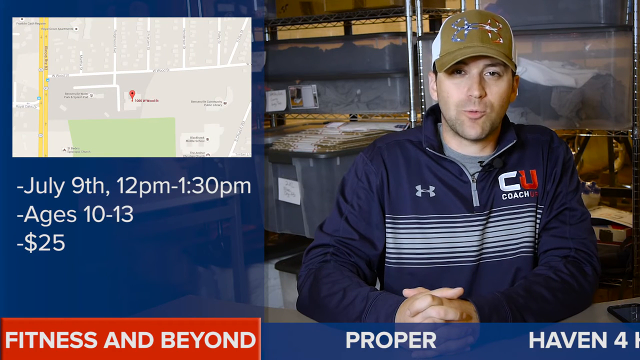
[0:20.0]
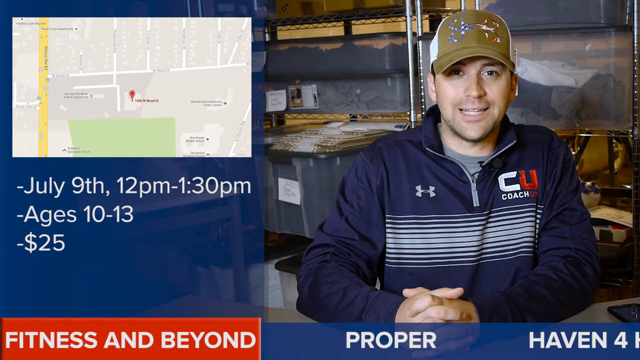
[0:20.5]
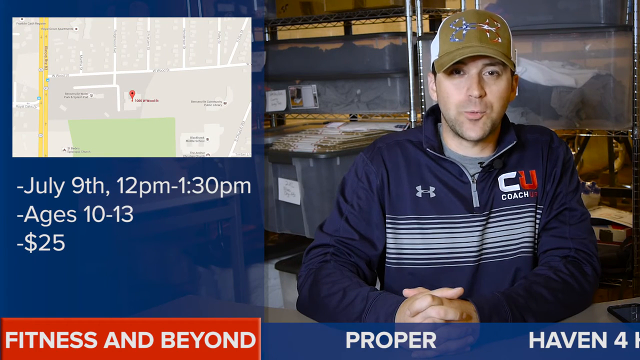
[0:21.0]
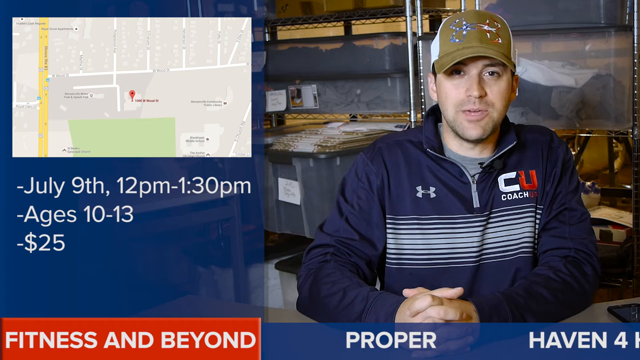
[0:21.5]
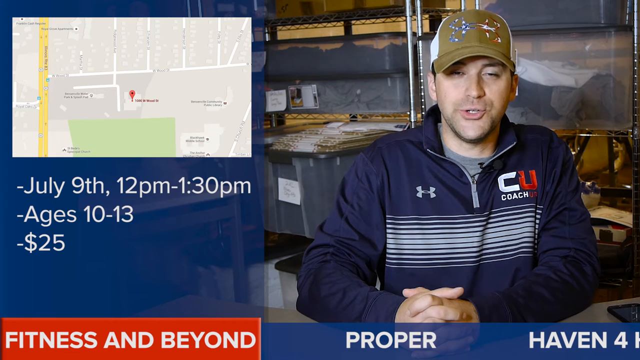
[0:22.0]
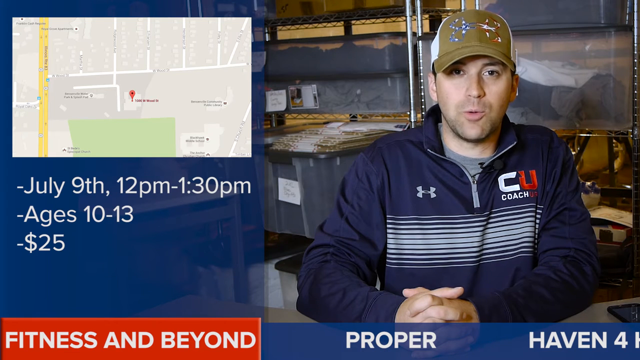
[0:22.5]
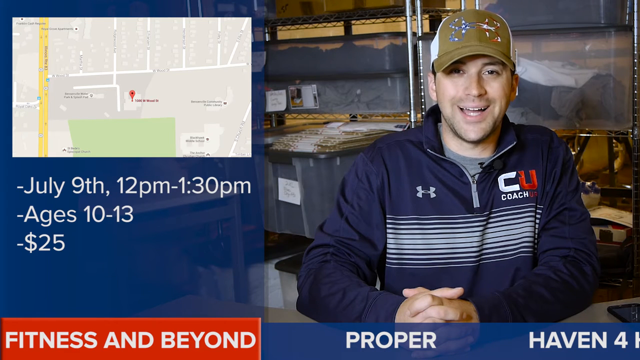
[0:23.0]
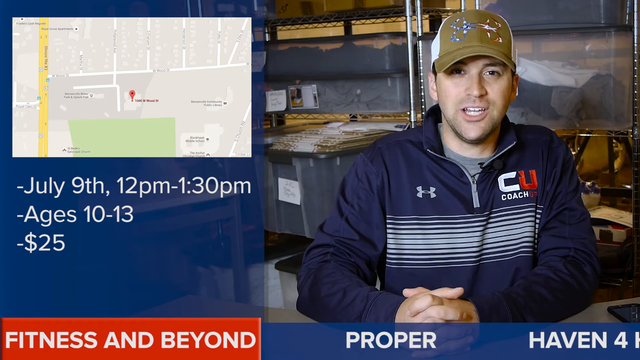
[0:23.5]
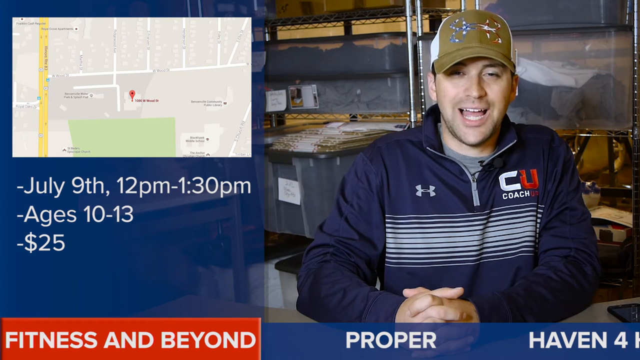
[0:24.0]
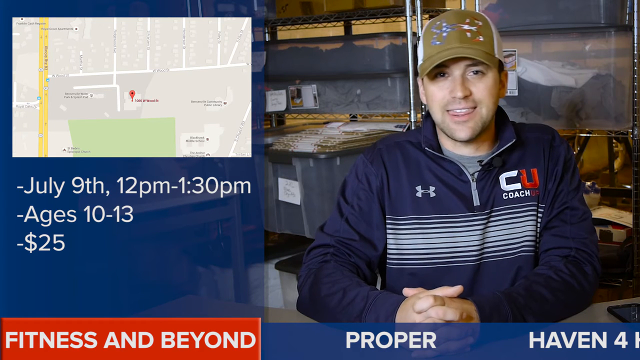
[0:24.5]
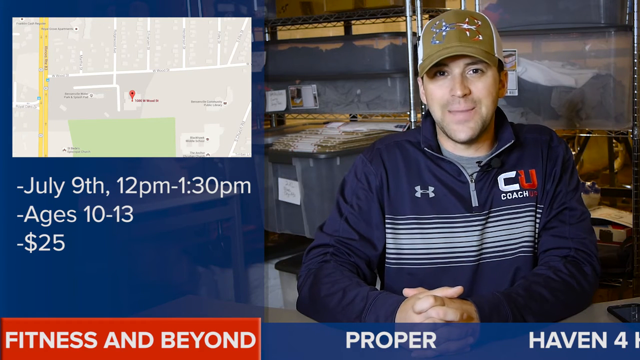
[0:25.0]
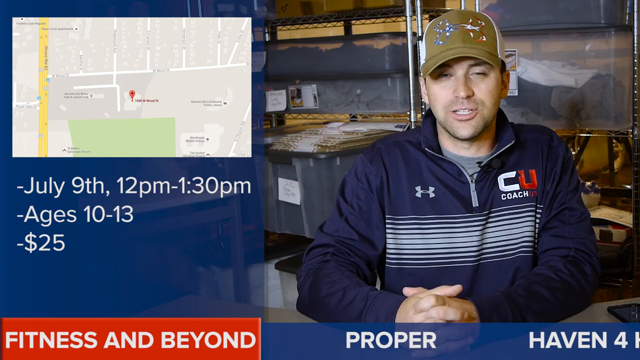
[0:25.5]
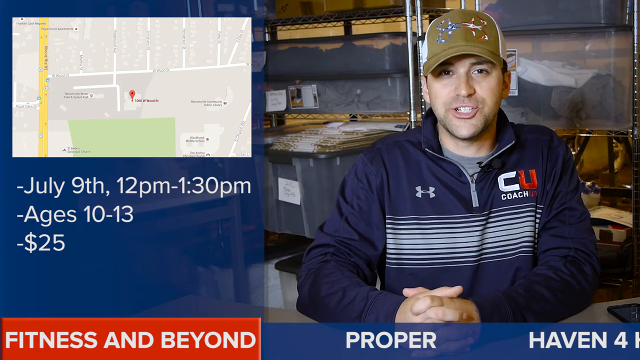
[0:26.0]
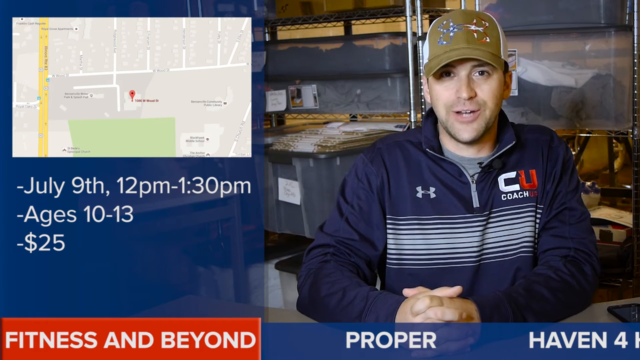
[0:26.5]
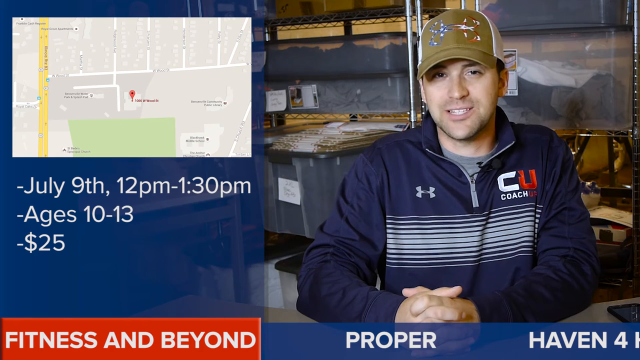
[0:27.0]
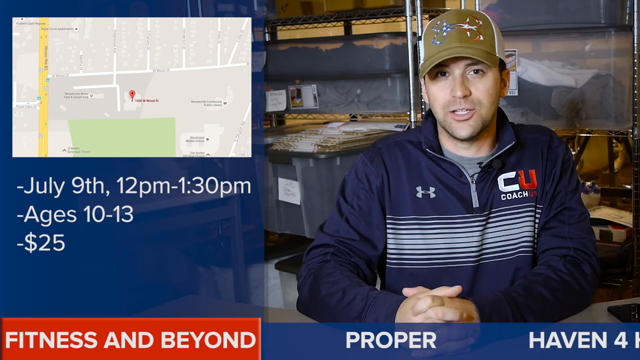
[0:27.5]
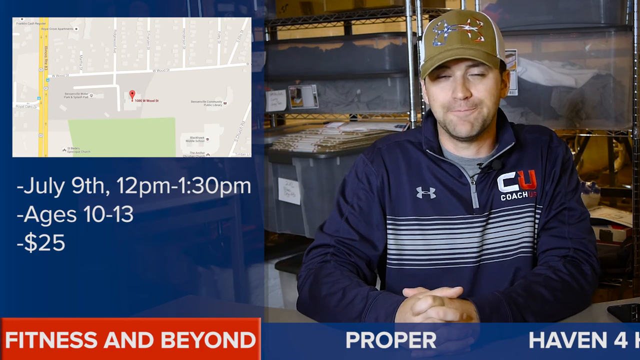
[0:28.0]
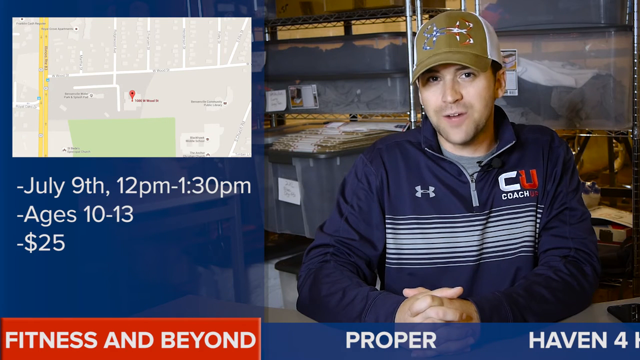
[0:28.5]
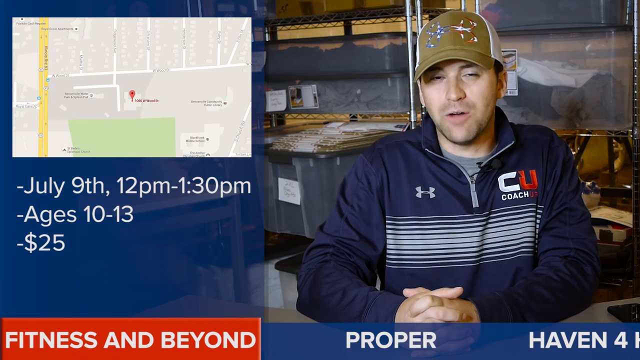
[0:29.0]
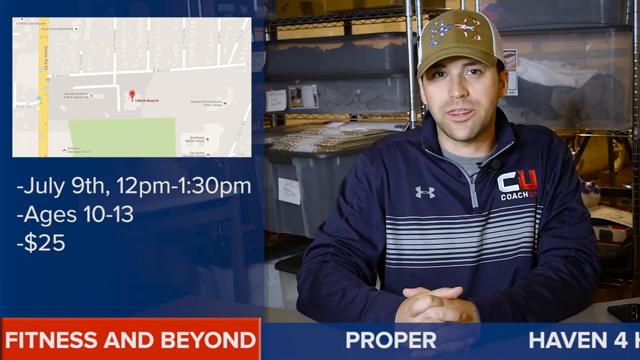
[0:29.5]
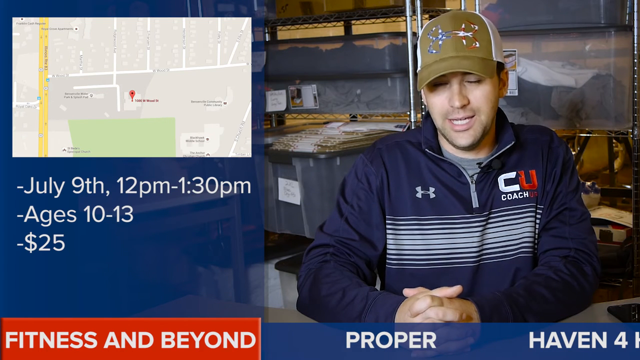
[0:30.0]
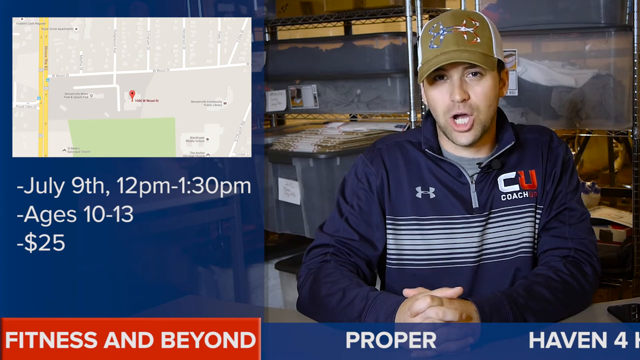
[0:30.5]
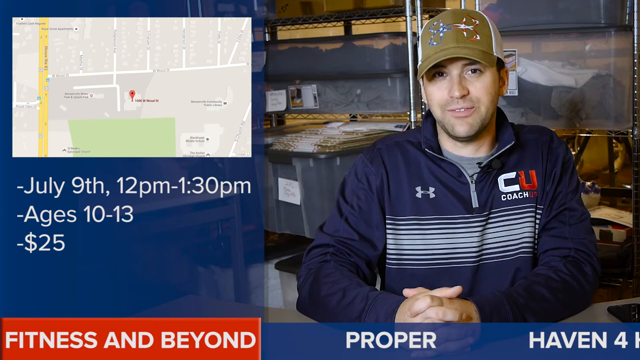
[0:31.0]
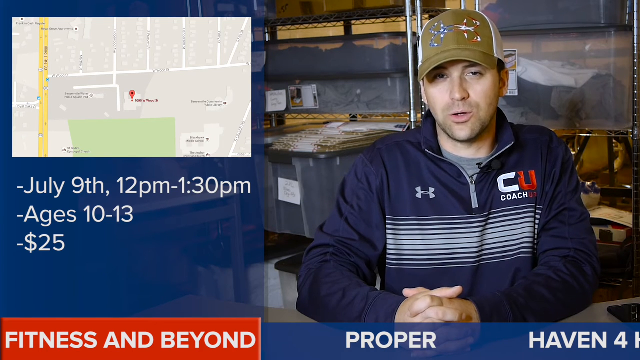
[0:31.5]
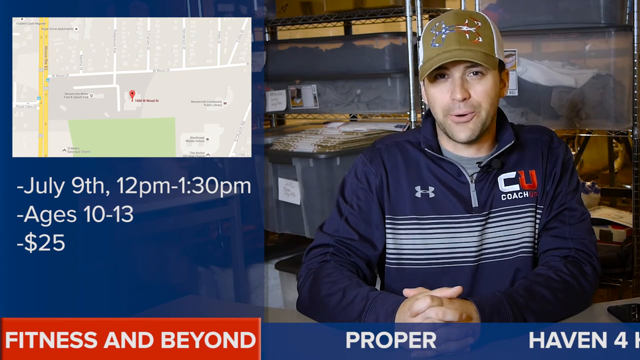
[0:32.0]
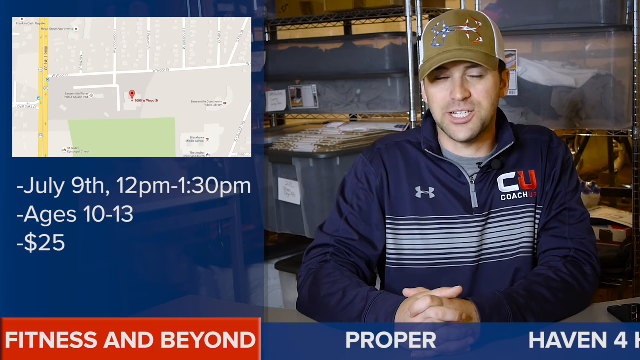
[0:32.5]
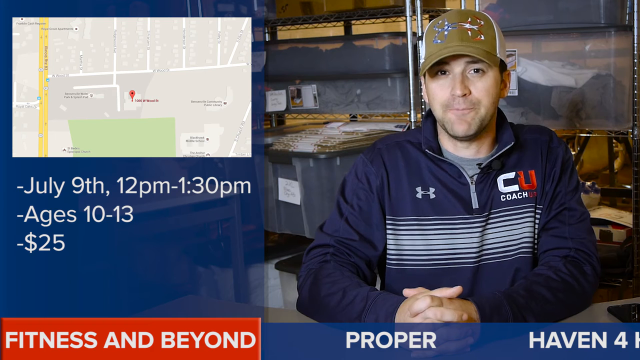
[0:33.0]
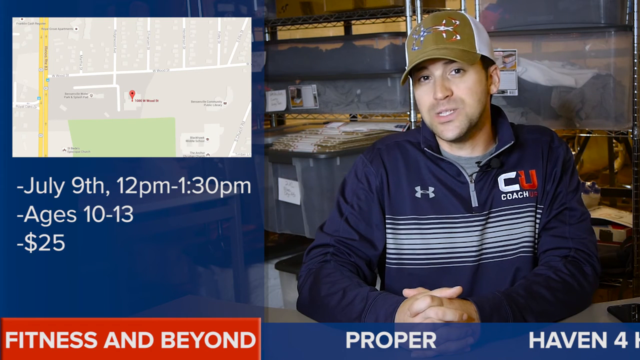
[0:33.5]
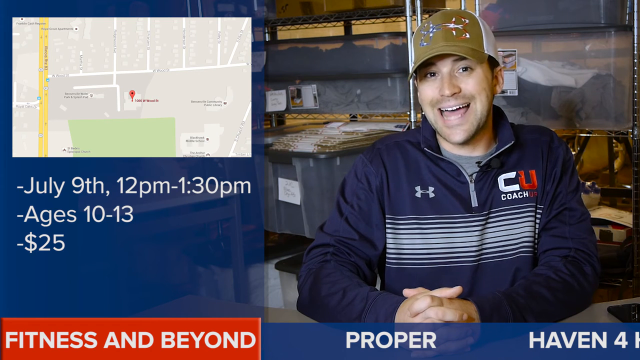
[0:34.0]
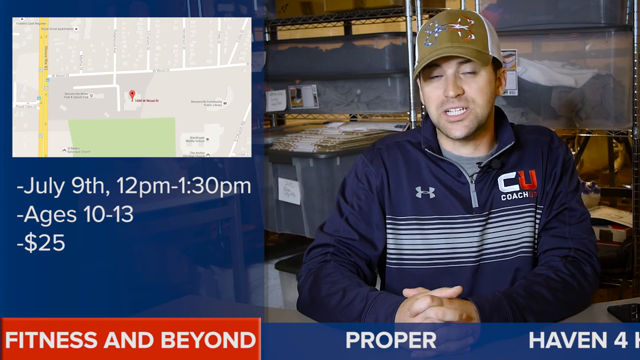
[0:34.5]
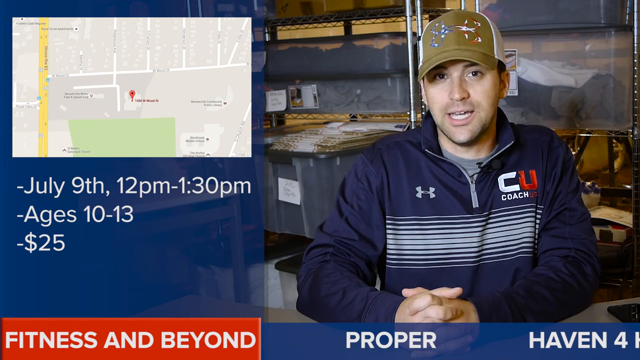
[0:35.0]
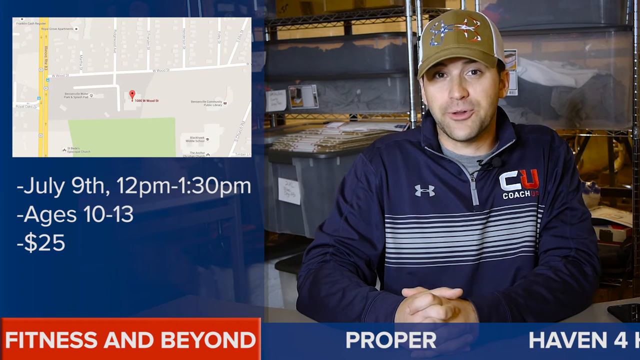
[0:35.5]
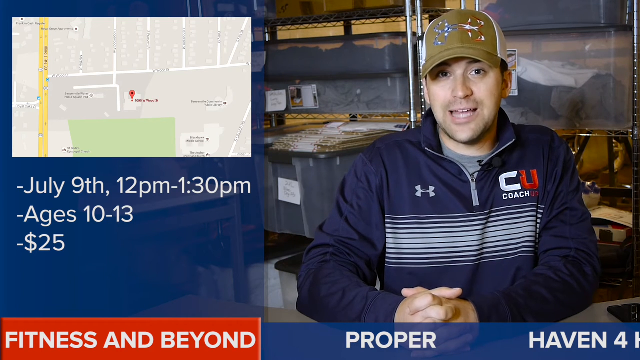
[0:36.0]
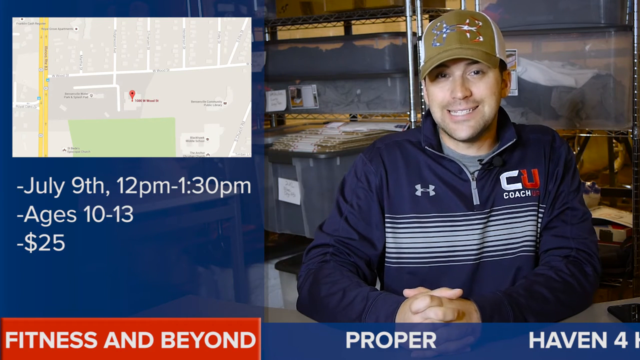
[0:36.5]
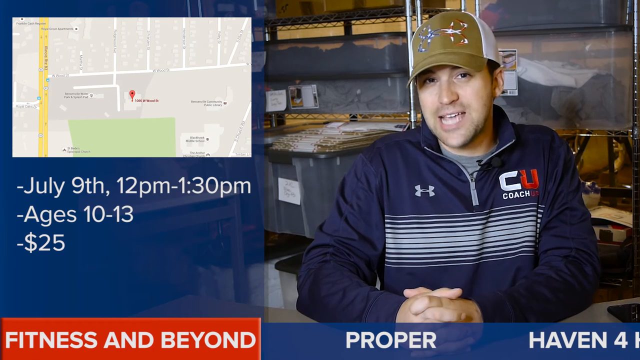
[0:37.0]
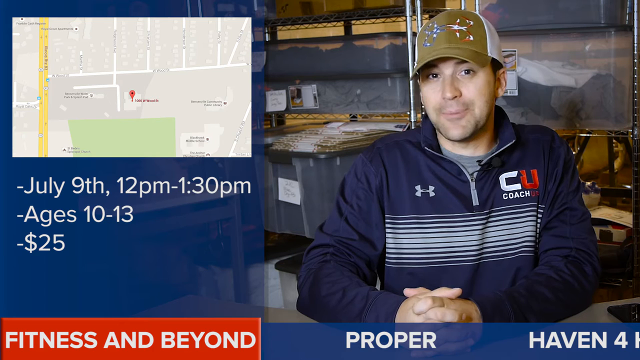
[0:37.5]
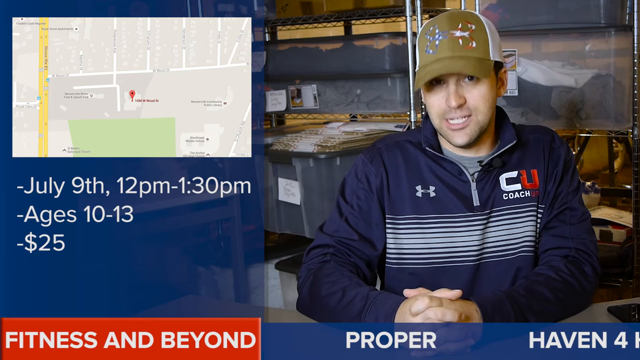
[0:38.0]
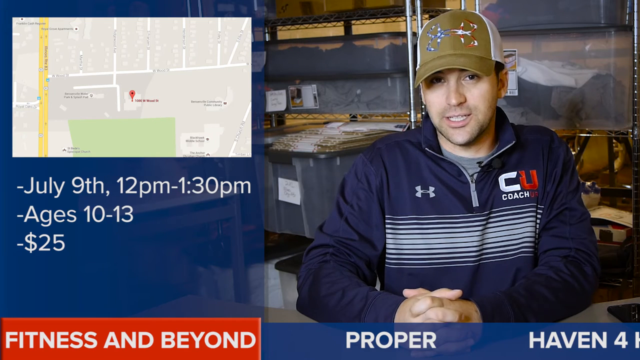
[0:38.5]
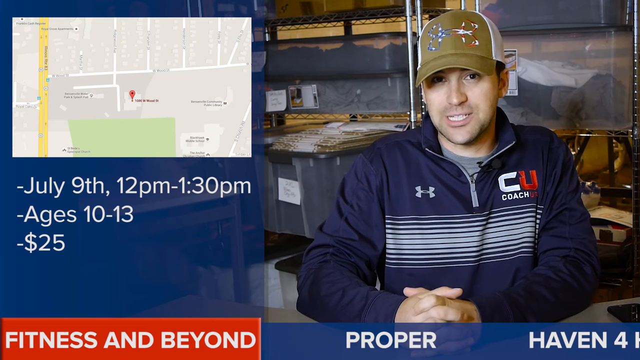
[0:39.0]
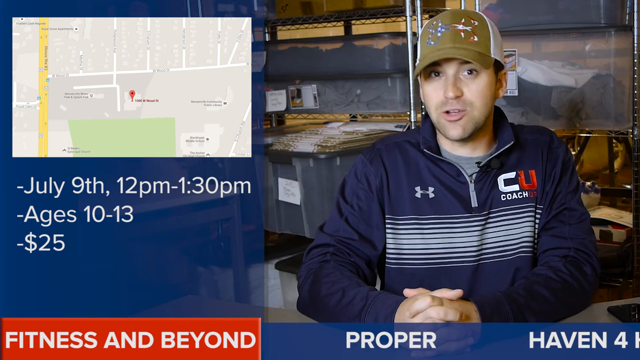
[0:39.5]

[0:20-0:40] A man, a fitness coach, sits in an office-type setting talking to the camera the entire time. Behind him there appear to be a bunch of plastic totes with plastic lids, full of things, in what looks like a garage setting. He appears to be sitting at a desk. On the left side of the screen is a Google map with a pin marking a location, and below it the text reads "July 9th, 12 PM to 1.30 PM, ages 10-13, $25." His sweatshirt says "coach" underneath his logo, and his hat is a brownish tan color on the front with some type of logos on it. On the lower part of the screen, "fitness and beyond" appears on the left, and more words appear along the bottom, including "proper" and "haven."